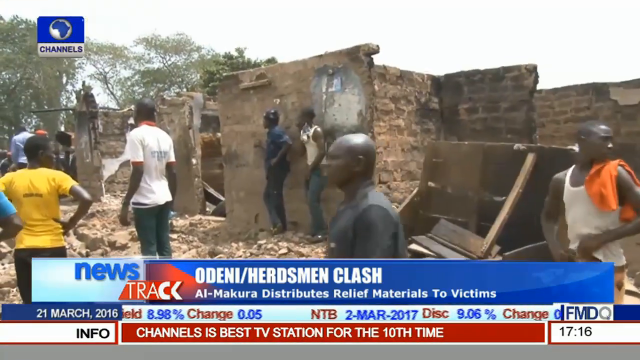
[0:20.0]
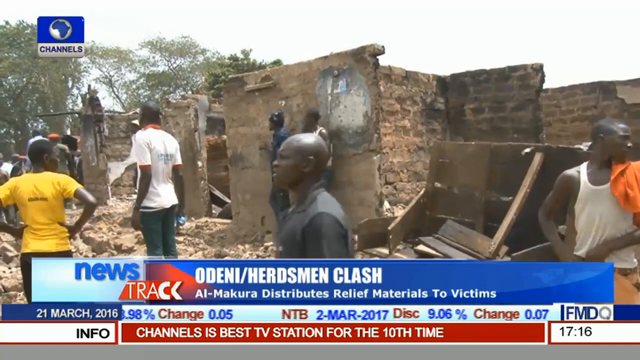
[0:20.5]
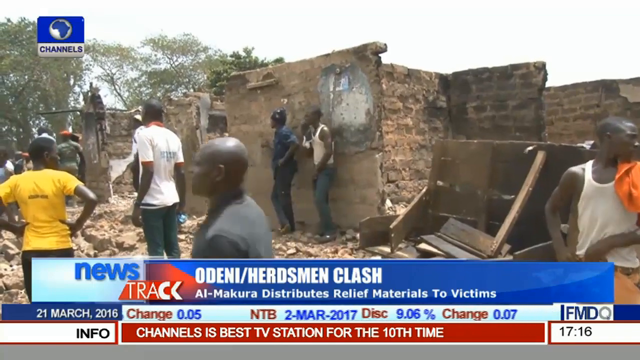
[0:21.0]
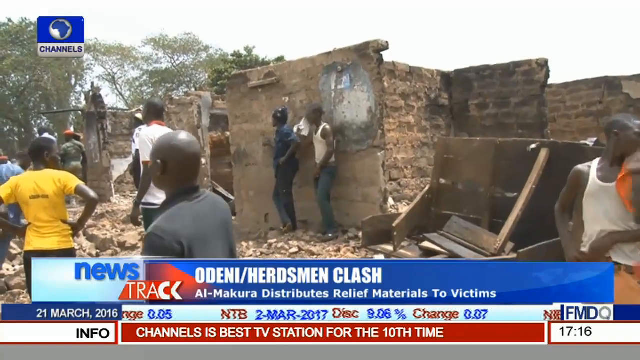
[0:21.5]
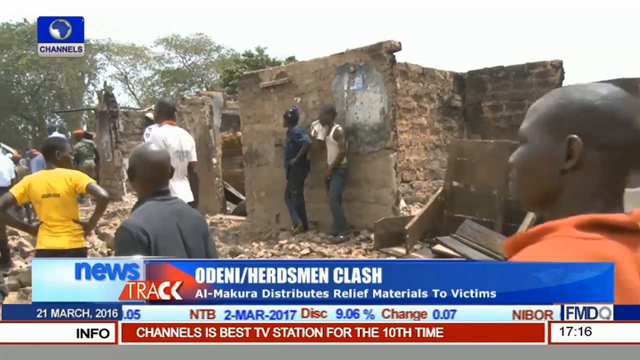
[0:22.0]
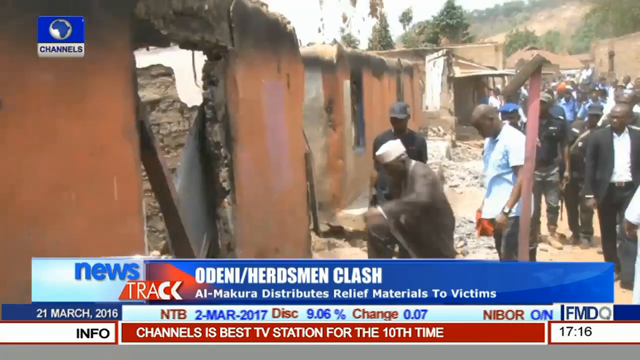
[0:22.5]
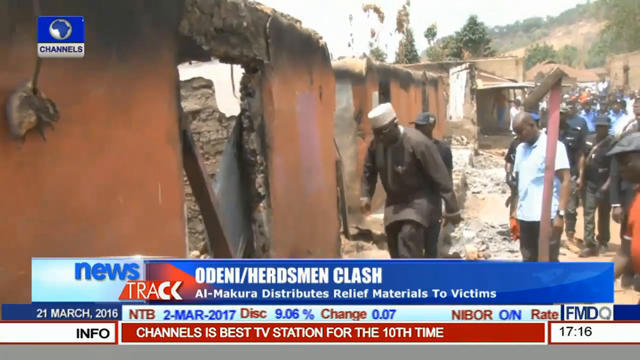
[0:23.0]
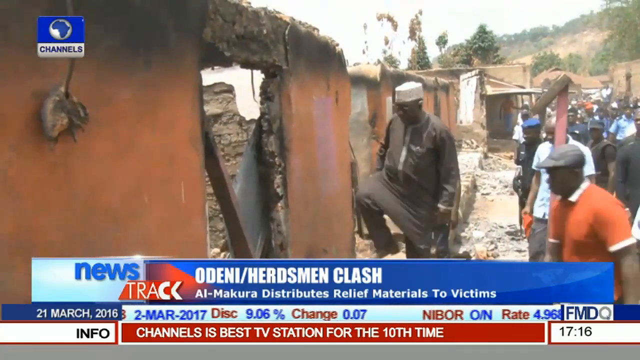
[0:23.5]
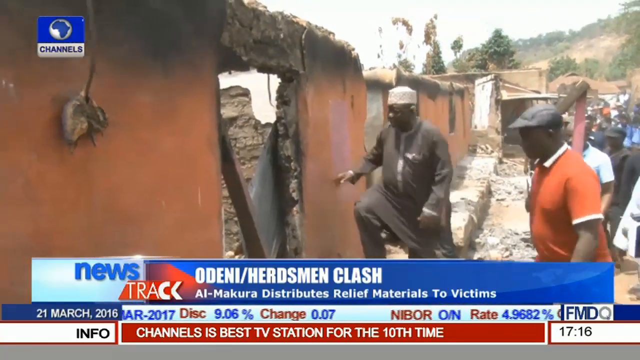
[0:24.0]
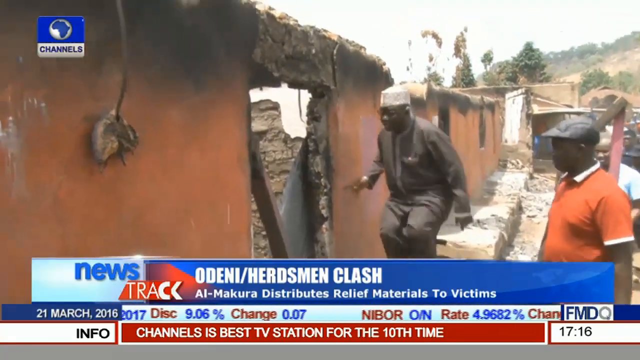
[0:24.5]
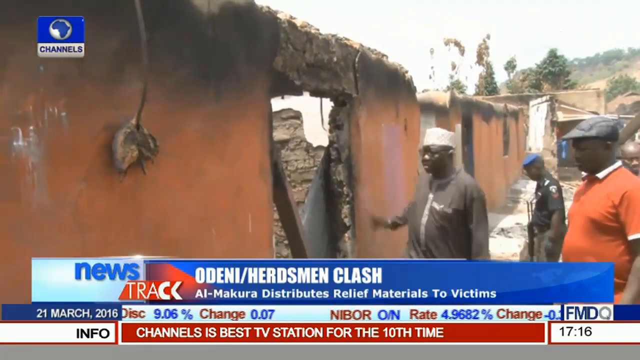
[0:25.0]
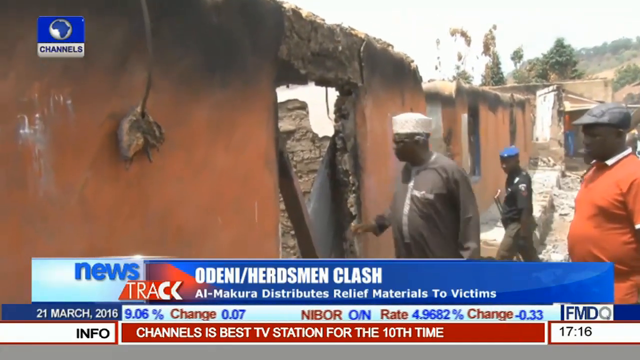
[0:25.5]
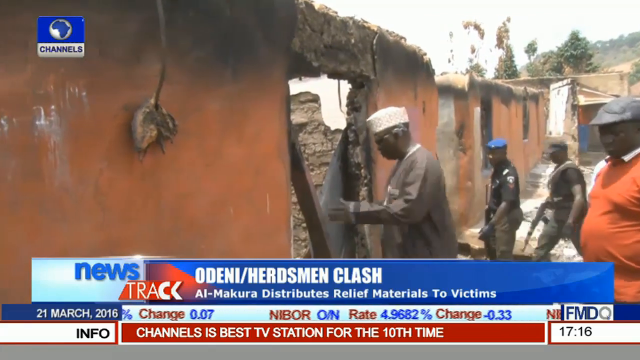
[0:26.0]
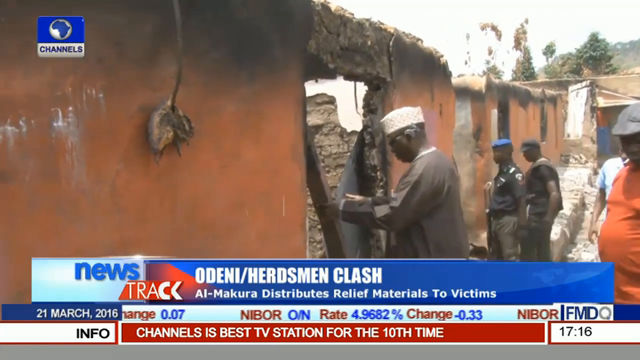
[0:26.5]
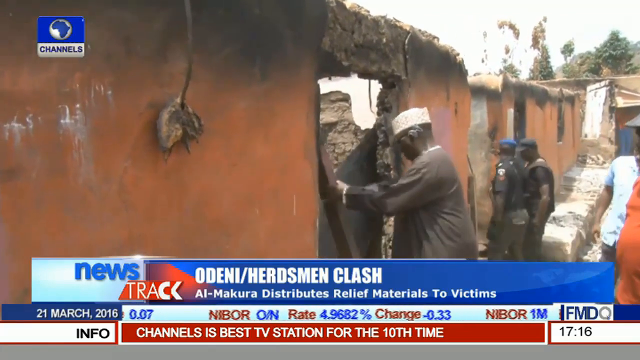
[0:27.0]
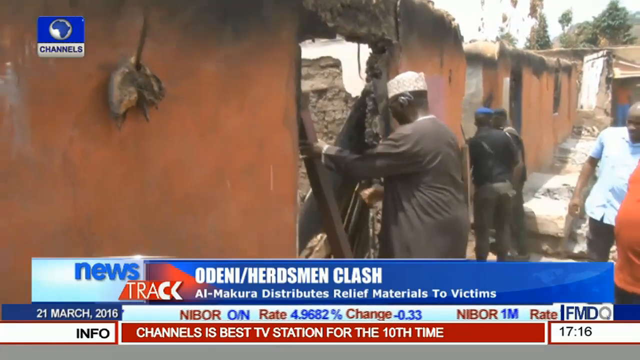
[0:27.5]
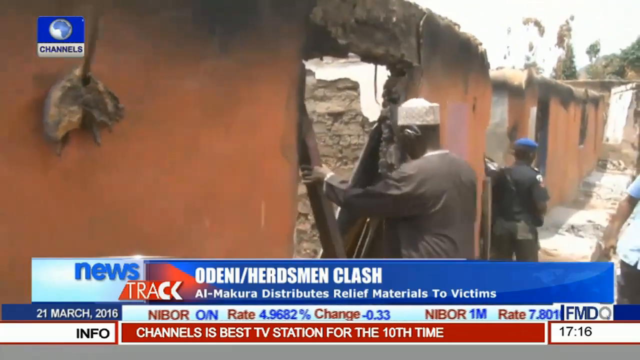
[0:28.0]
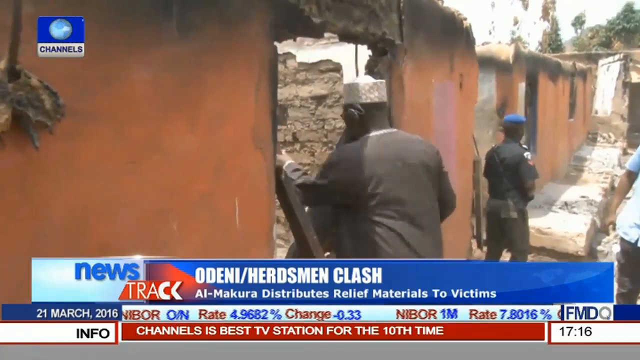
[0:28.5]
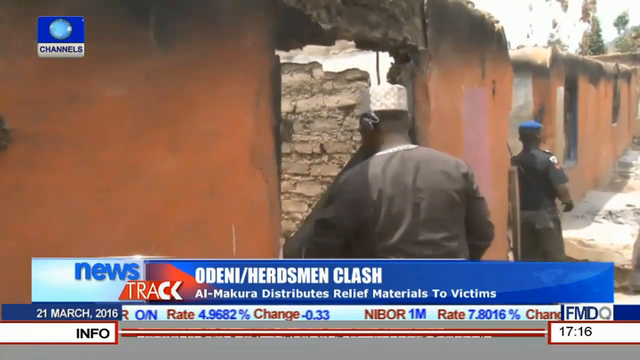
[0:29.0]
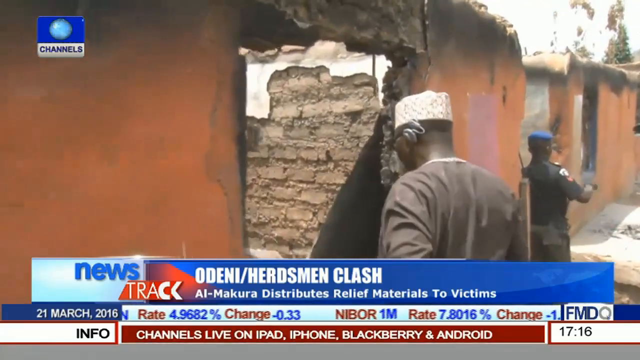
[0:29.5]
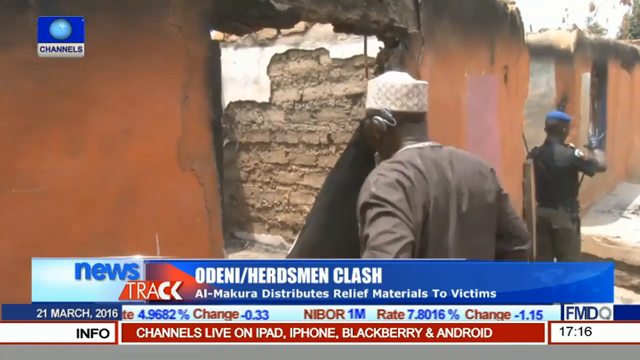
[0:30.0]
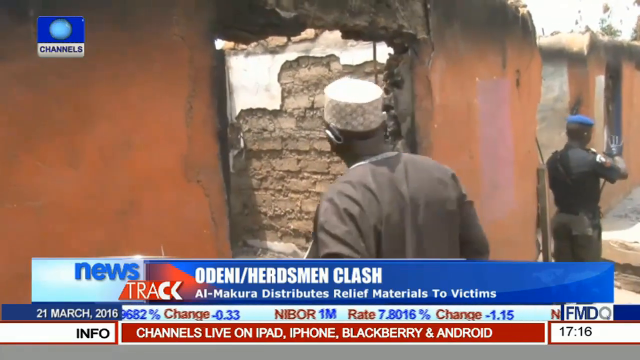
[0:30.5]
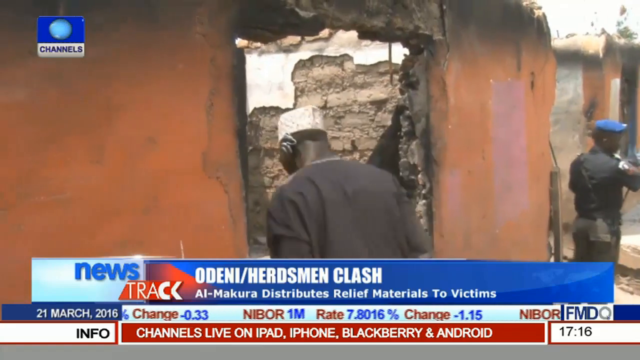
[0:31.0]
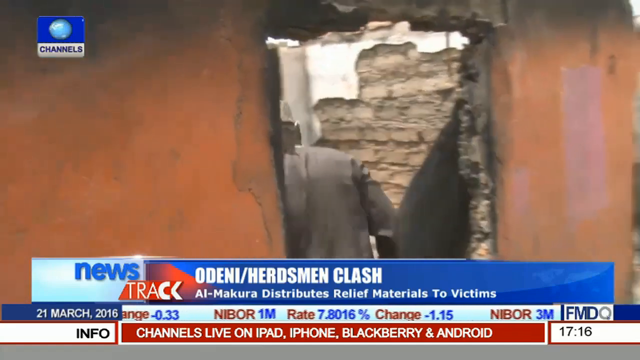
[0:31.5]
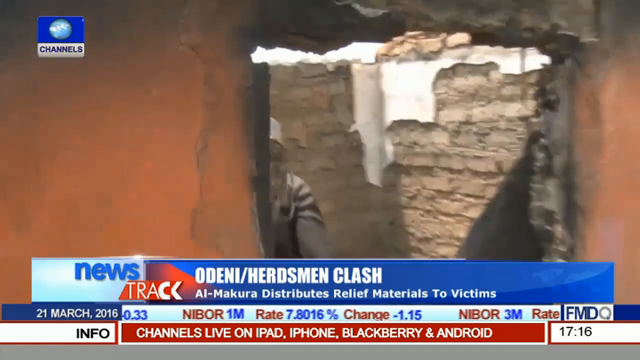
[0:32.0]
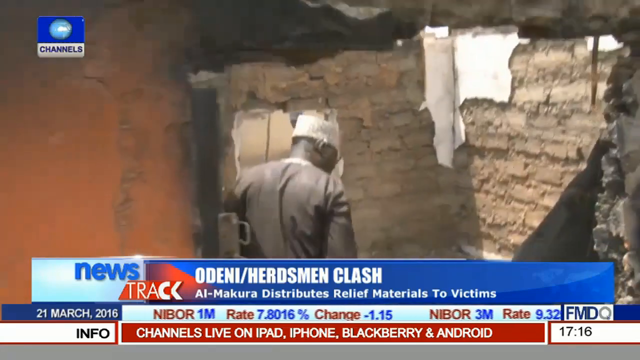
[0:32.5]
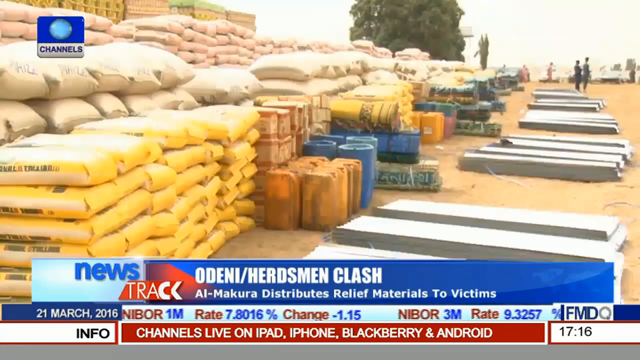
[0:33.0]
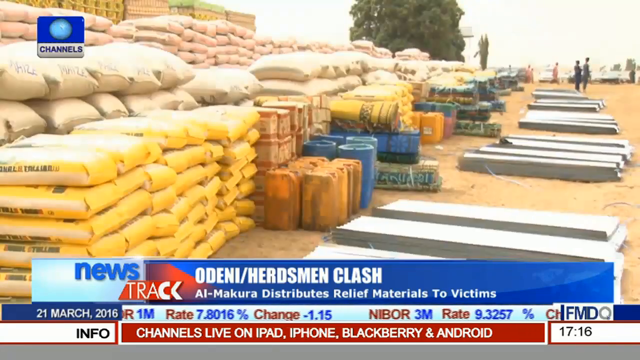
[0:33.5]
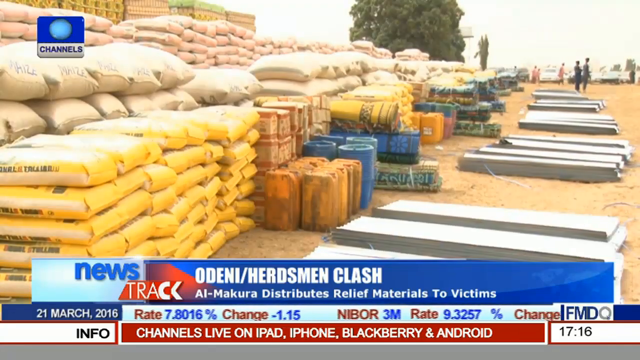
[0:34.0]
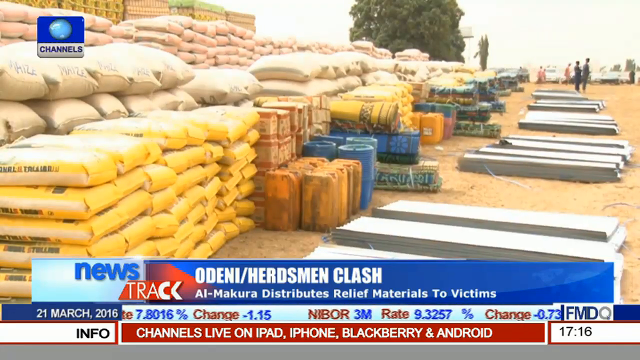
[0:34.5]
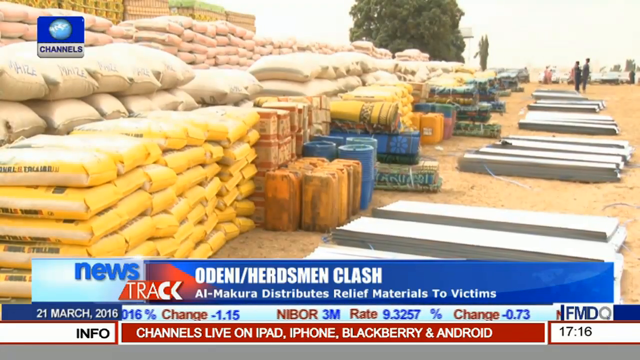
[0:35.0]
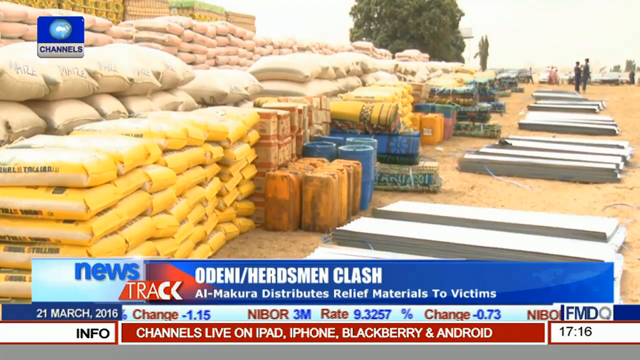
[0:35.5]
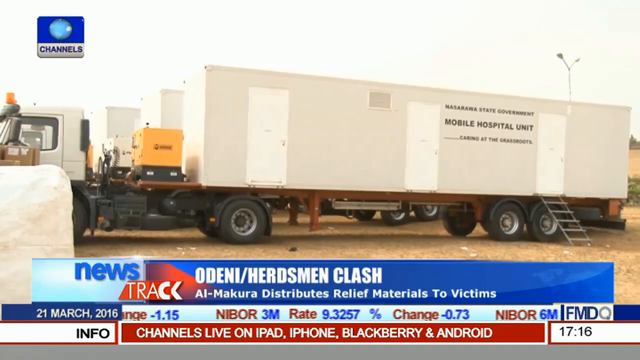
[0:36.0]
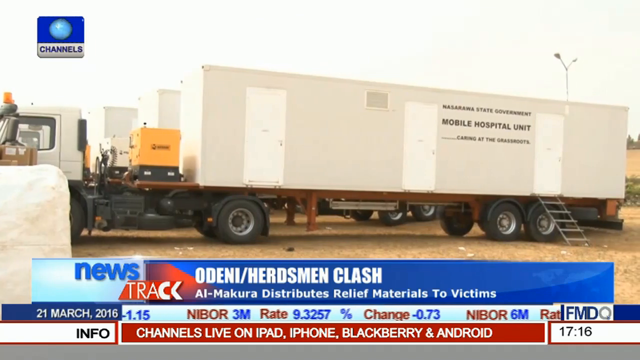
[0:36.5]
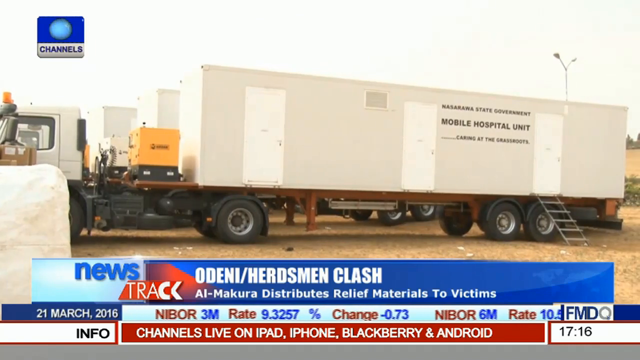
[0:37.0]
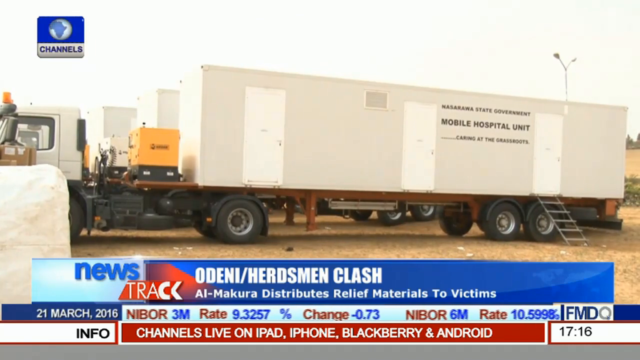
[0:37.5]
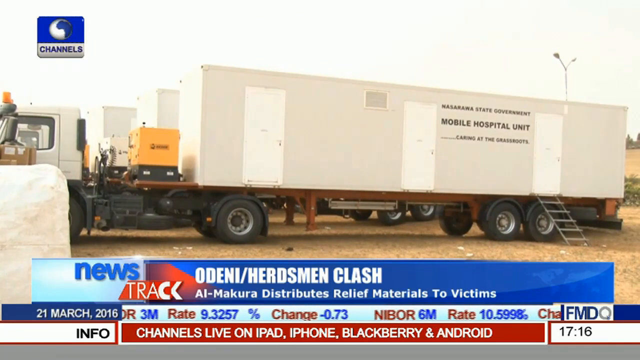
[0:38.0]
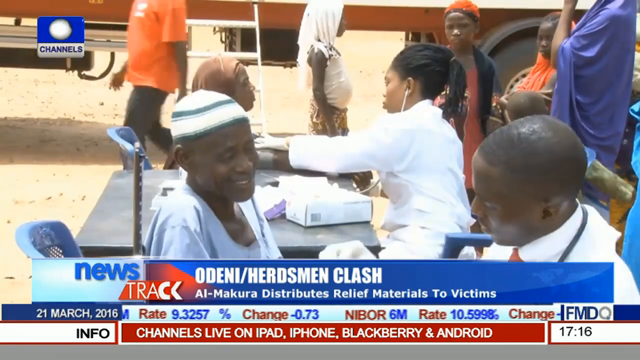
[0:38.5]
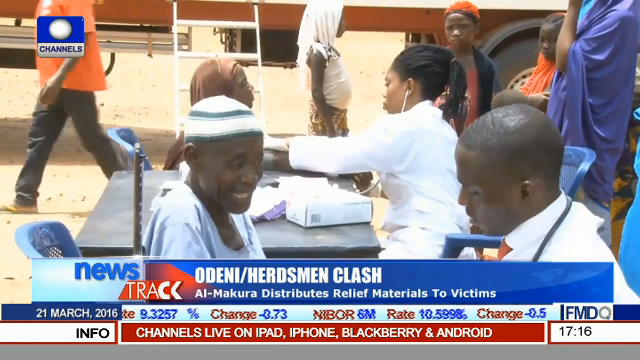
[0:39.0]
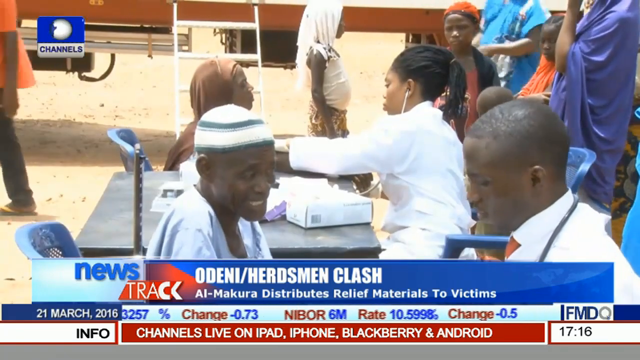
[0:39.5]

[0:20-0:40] The news program shows what looks like buildings that have started to crumble, and the screen says that there was a clash and that relief needs to be distributed to victims. People are standing around the rubble, and a couple of men approach a building that looks like it had a fire, trying to go into the remains. One of the men, who wears a white hat, walks in. Next, what looks like supplies appear in a very long row that goes deep: bags, possibly water, and all kinds of containers. People are walking in the distance. A truck with mobile hospital units as the trailer appears. Then what appear to be some people are sitting at tables, and two people in doctor's type coats appear to be checking their vital signs, with others possibly waiting for their turn.